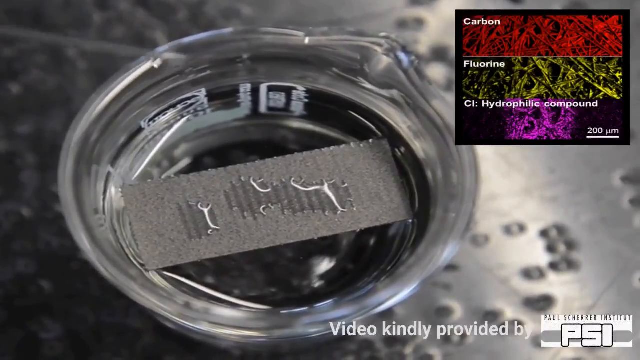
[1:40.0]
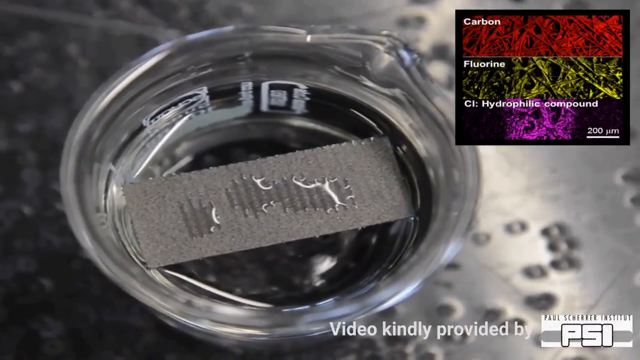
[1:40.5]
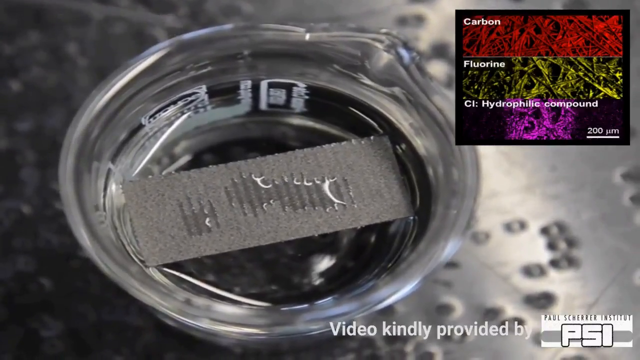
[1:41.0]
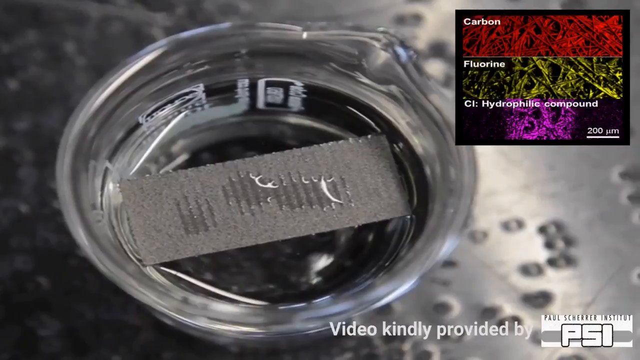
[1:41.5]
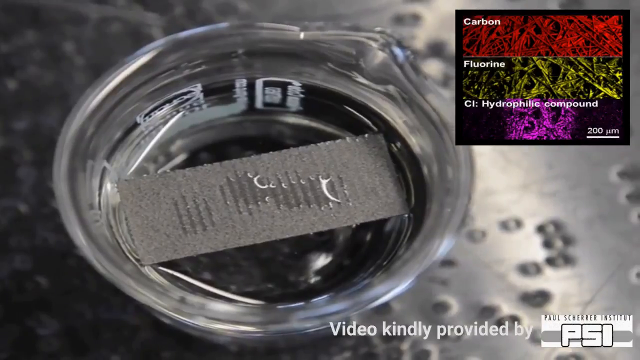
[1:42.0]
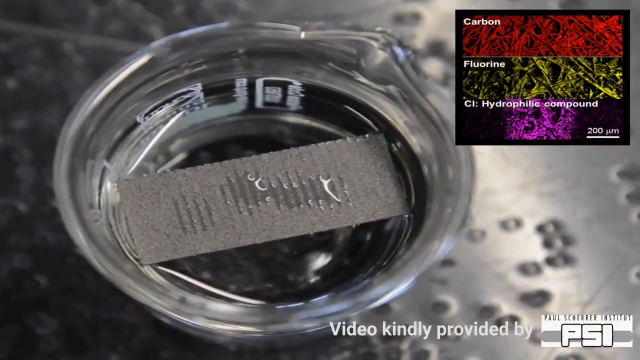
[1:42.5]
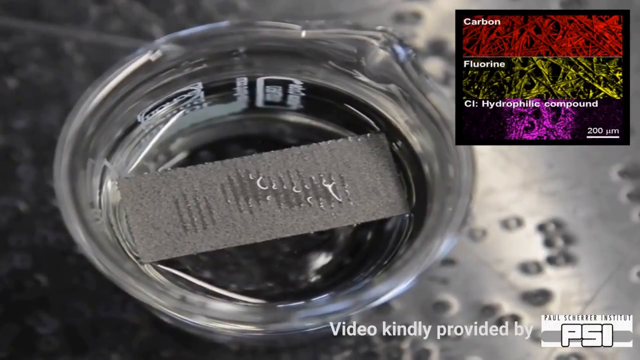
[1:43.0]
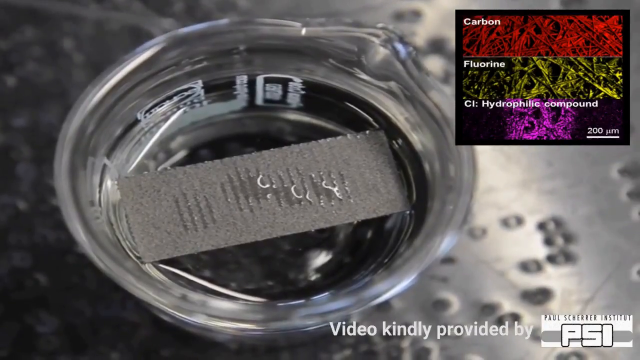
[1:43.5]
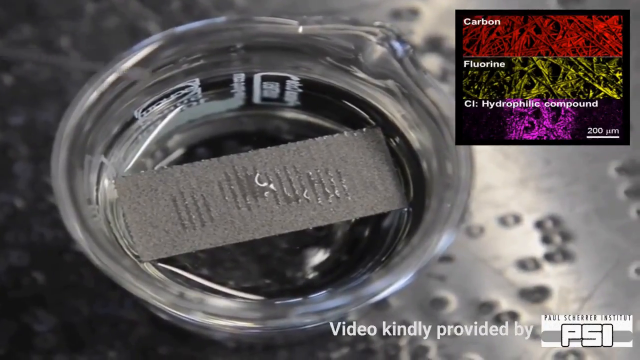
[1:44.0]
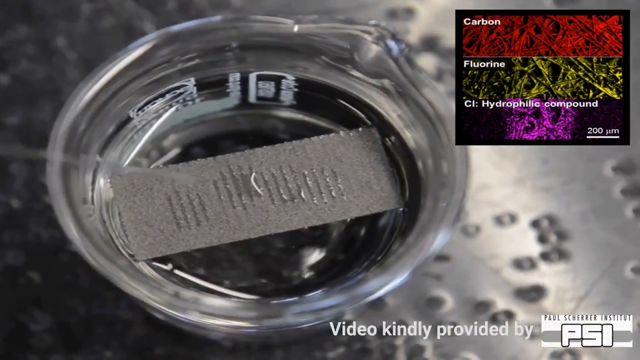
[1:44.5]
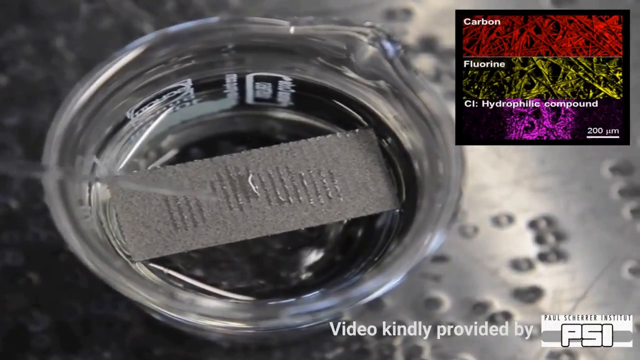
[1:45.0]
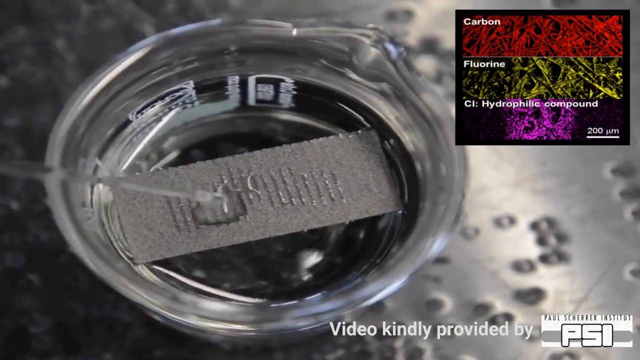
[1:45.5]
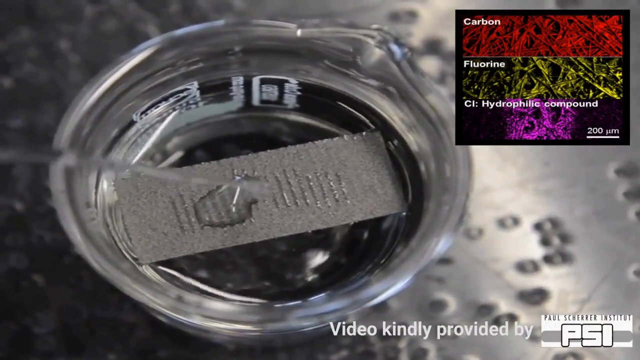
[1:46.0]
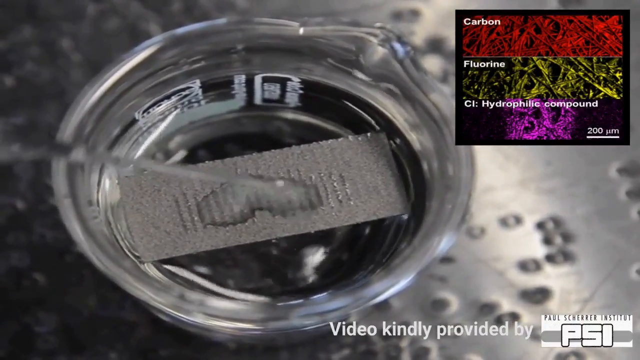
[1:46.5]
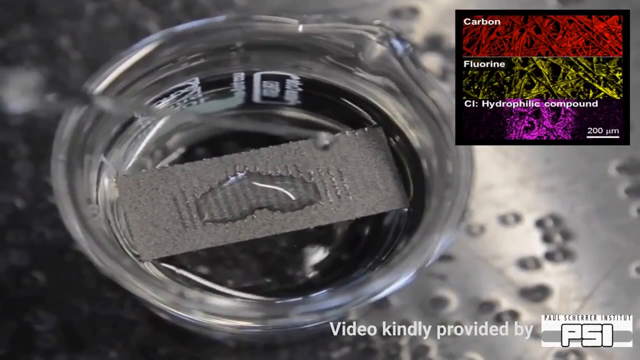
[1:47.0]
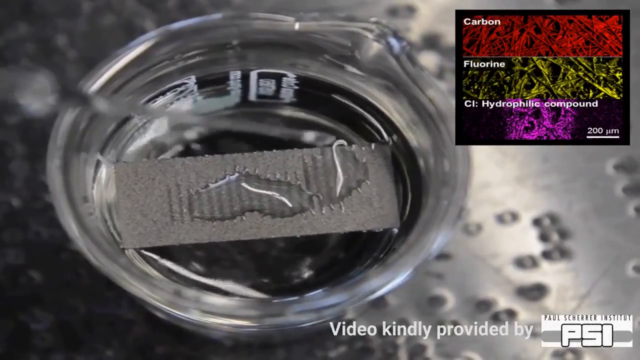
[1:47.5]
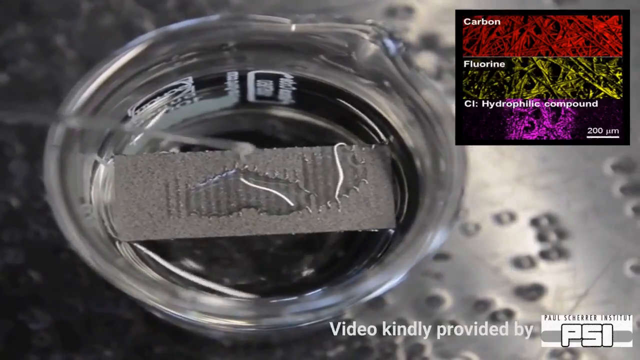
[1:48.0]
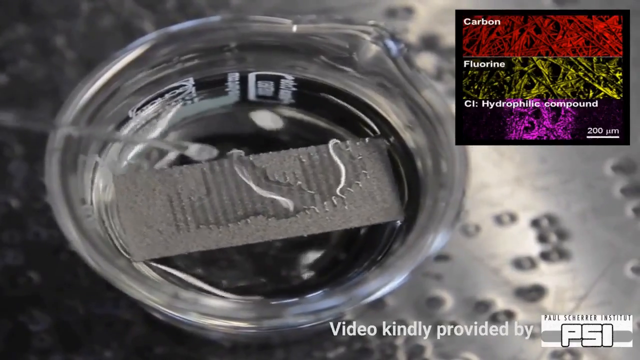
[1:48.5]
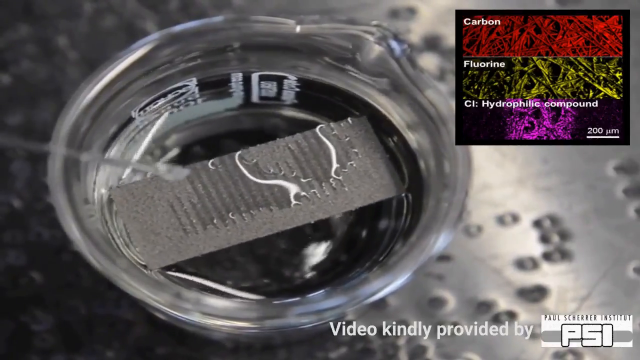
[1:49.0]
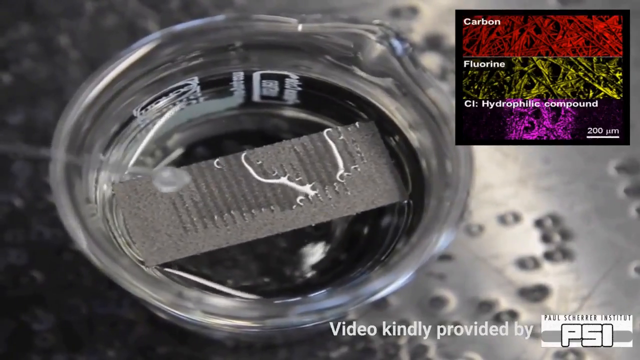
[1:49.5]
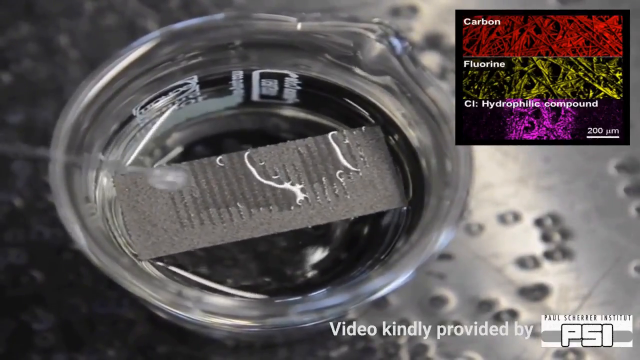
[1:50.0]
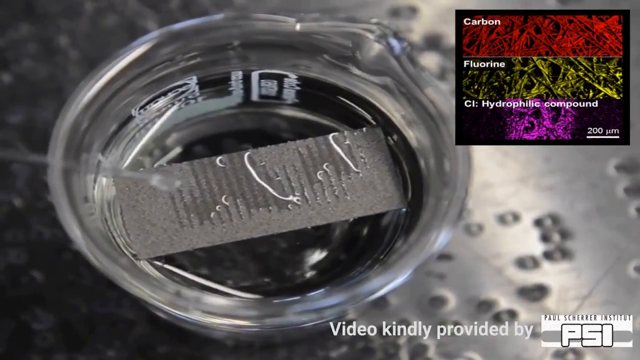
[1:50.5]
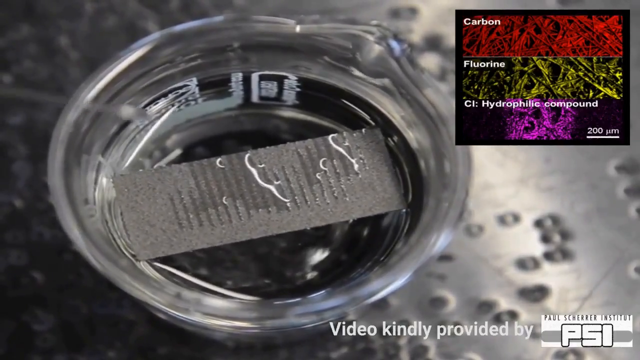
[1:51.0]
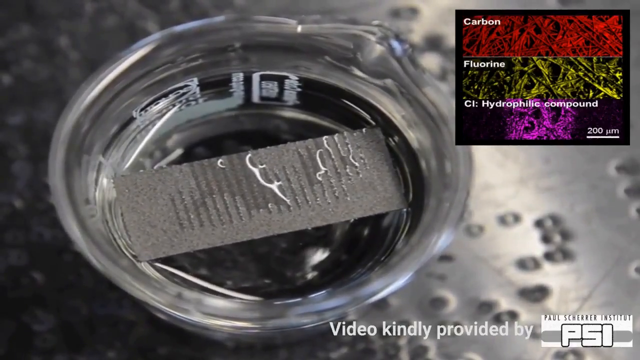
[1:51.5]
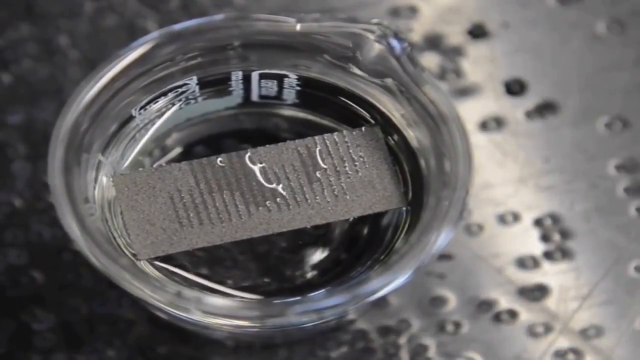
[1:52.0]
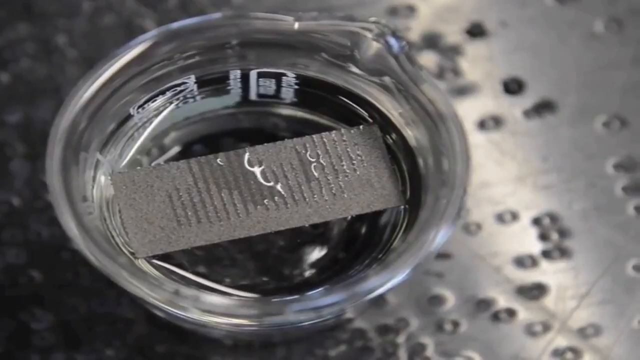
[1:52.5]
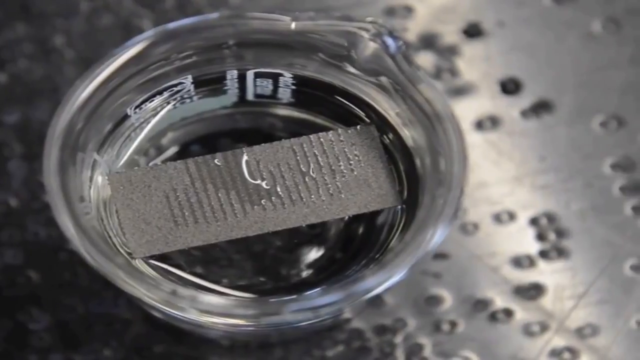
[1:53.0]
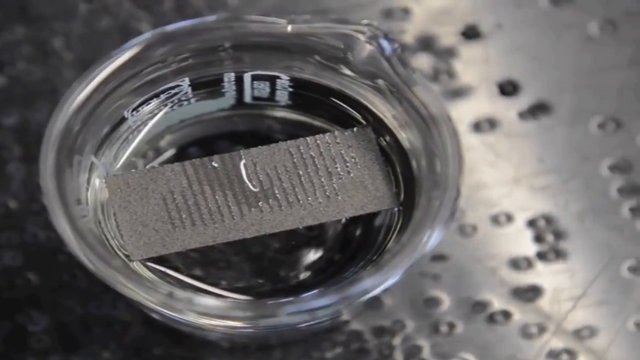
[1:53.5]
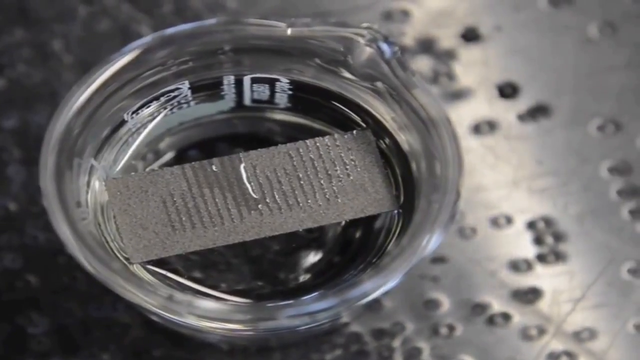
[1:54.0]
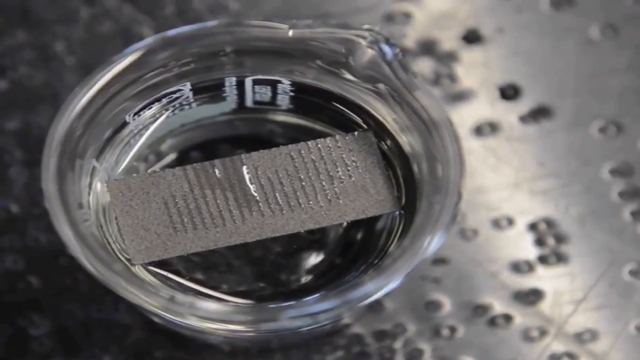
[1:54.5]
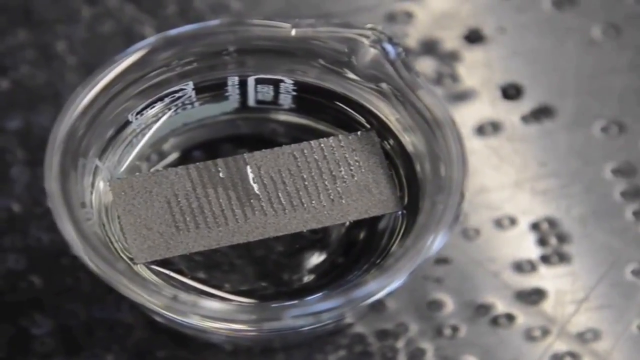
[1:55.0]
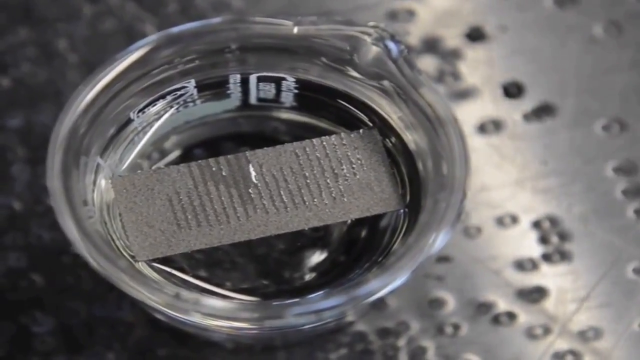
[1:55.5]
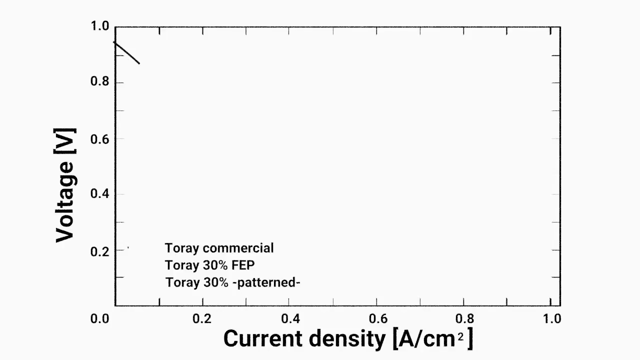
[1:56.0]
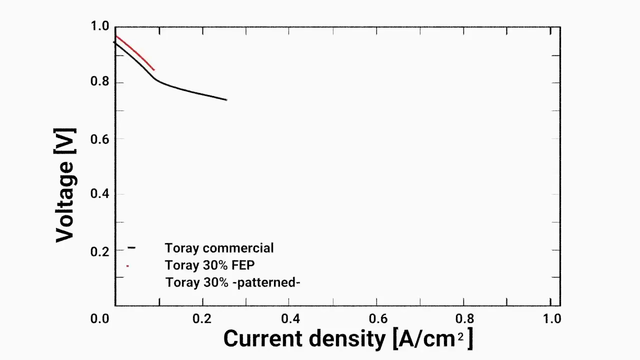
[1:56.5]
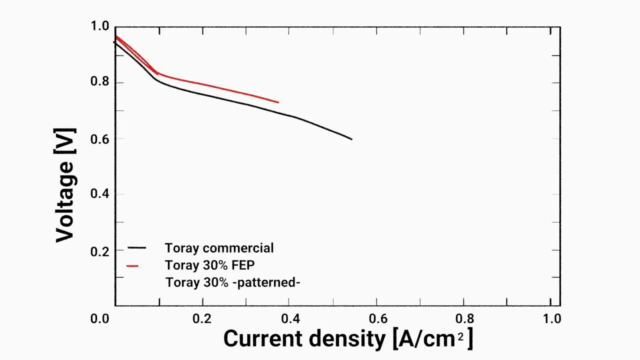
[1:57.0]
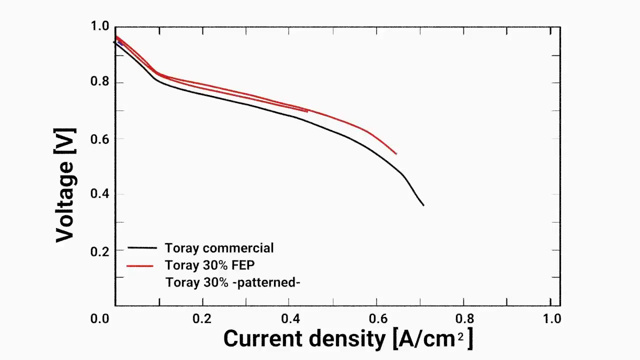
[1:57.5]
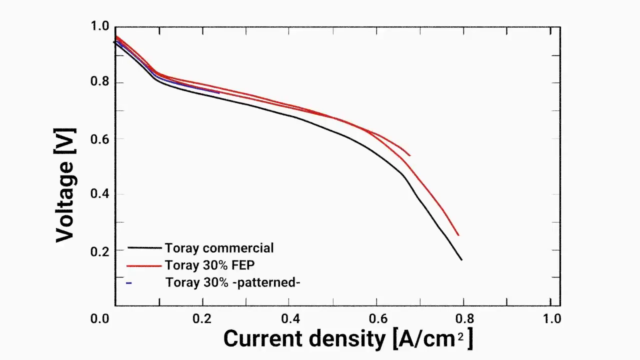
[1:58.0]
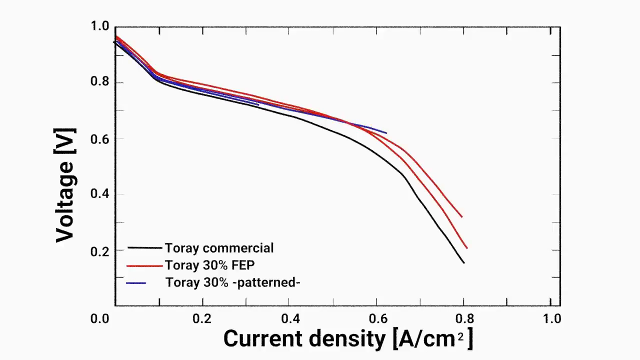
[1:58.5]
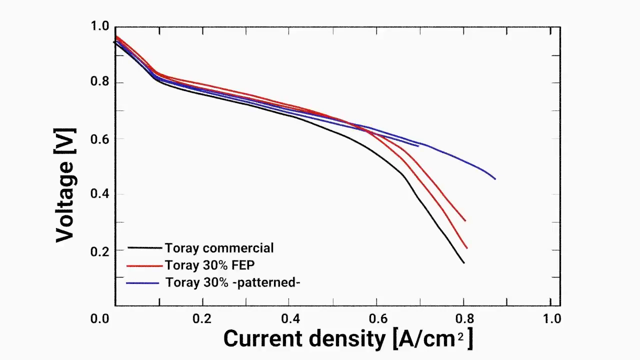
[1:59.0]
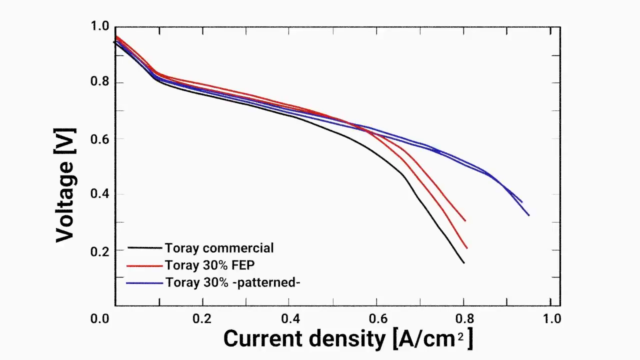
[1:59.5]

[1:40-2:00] The large beaker of water has fibrous material floating on top, and dripping water is absorbed into it, with some stripes absorbing the water and some not. A black box in the upper right of the screen contains three stripes, each with fibrous material: the top one is red and labeled in white "carbon," the middle one is green and labeled "fluorine," and the final one is purple and labeled "CI: hydrophilic compound." The shot stays on this as the pipette hovers above the material and drips more water on, which is absorbed in the same pattern and sets the light material moving a little. The image is replaced by a white background with an XY graph. The vertical axis is labeled voltage, with a voltage symbol, ranging from 0 to 1.0 in increments of 0.2, with little dashes marking each value. The bottom axis is labeled "current density" with "A/cm²" in square brackets, also ranging from 0.0 to 1.0 in 0.2 increments. In the lower left quadrant of the graph is the text "Toray Commercial," "Toray 30% MDP," and "Toray 30% Pattern." The graph is boxed in, and lines begin to appear in its top left corner, moving in curves at different angles toward the lower right corner.